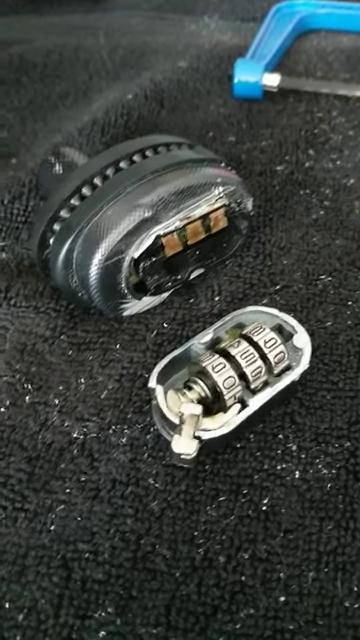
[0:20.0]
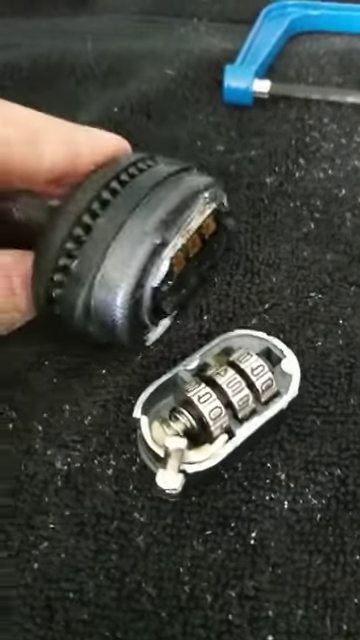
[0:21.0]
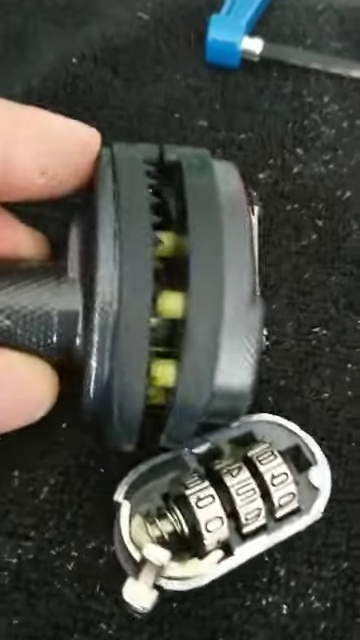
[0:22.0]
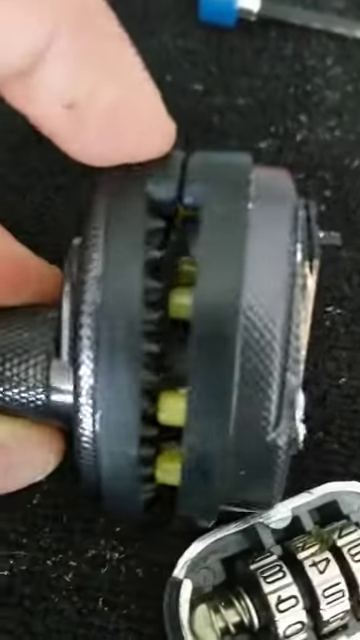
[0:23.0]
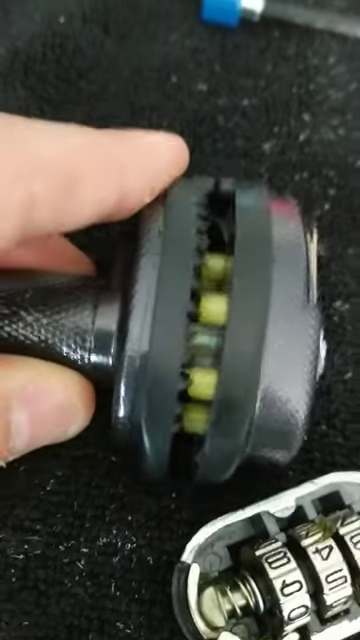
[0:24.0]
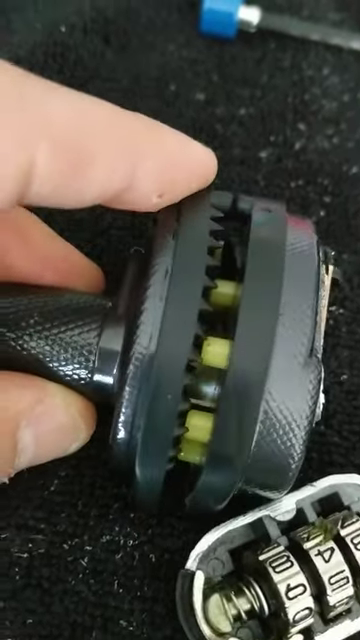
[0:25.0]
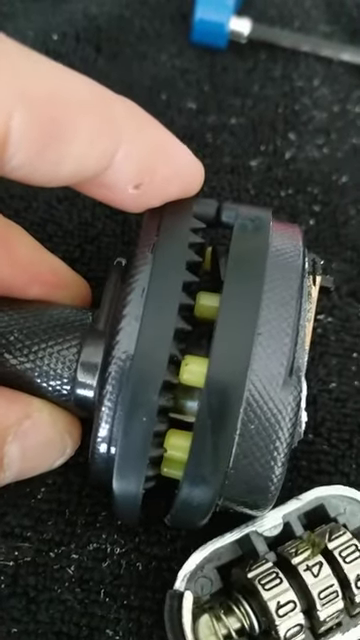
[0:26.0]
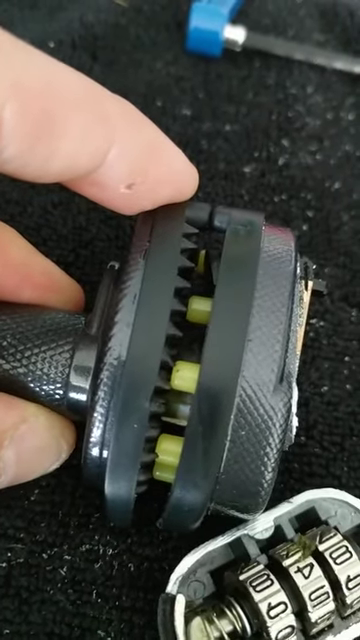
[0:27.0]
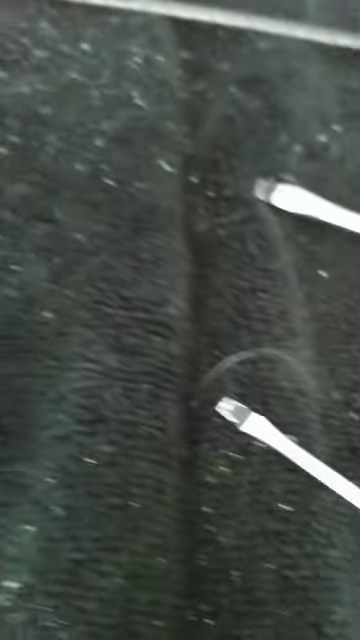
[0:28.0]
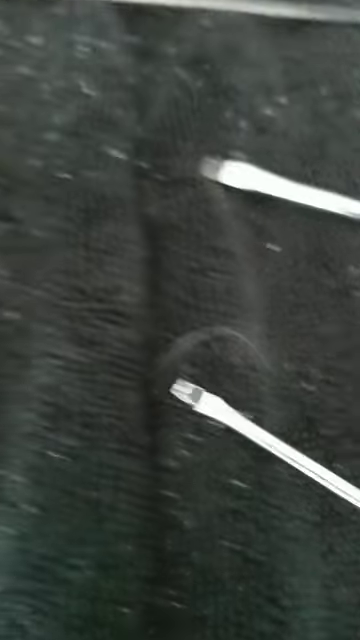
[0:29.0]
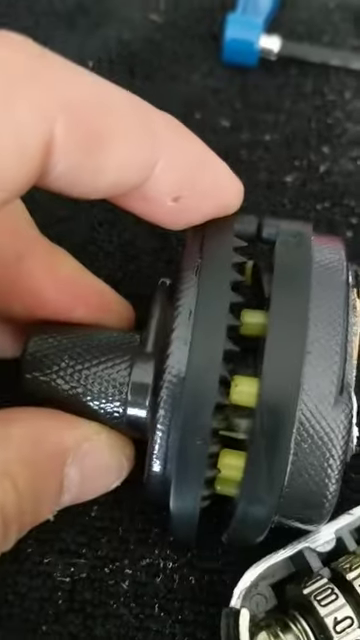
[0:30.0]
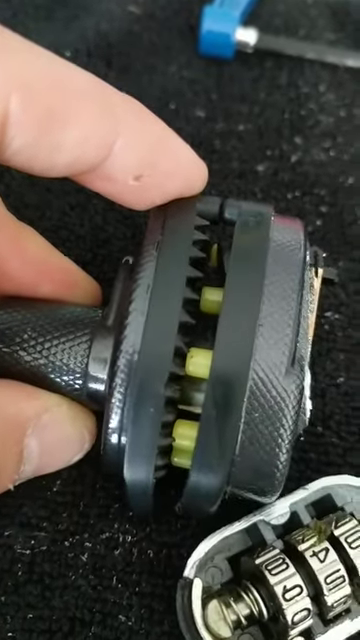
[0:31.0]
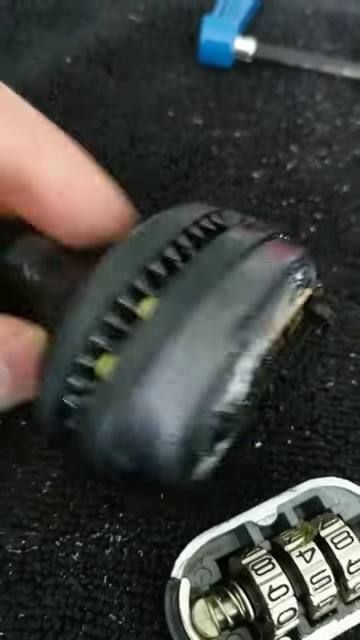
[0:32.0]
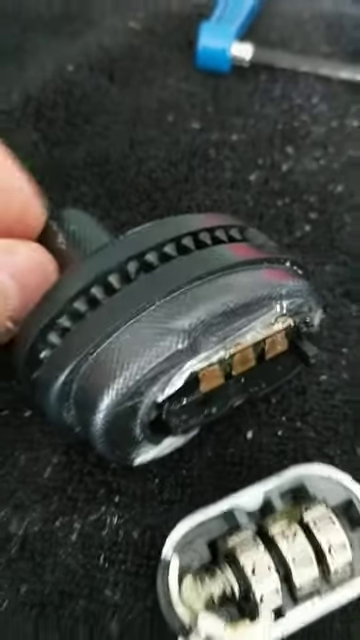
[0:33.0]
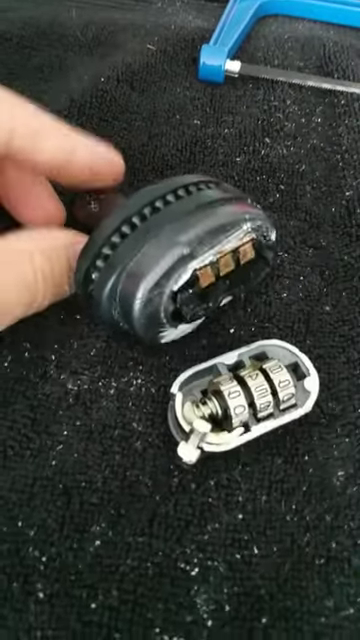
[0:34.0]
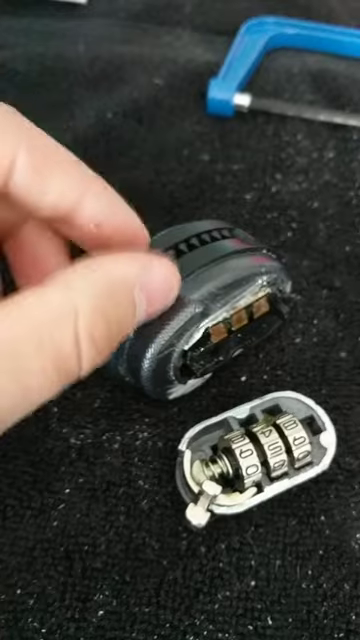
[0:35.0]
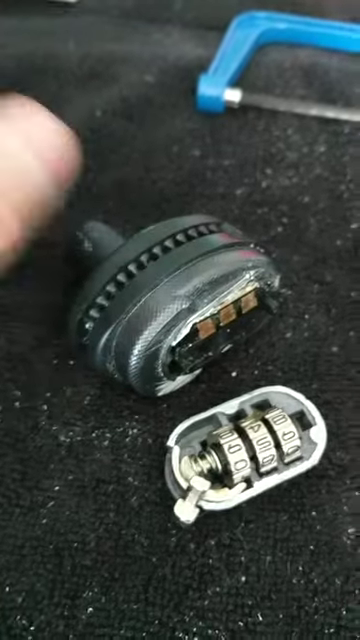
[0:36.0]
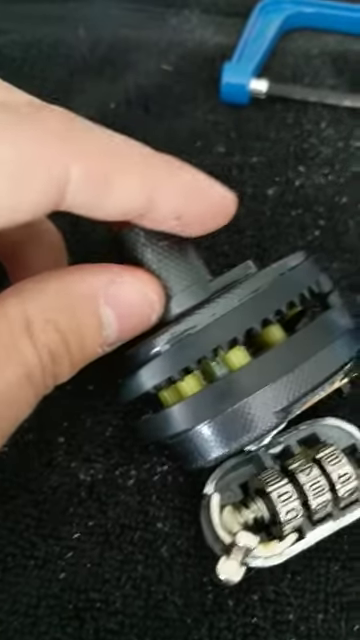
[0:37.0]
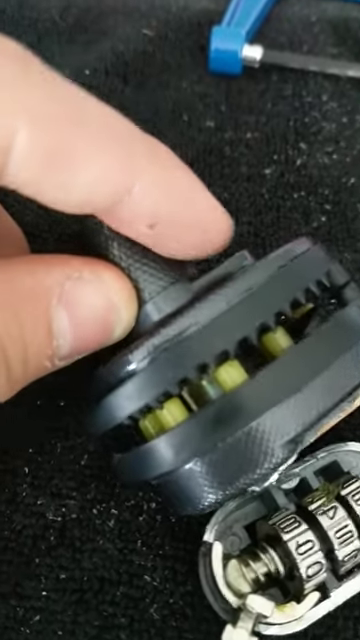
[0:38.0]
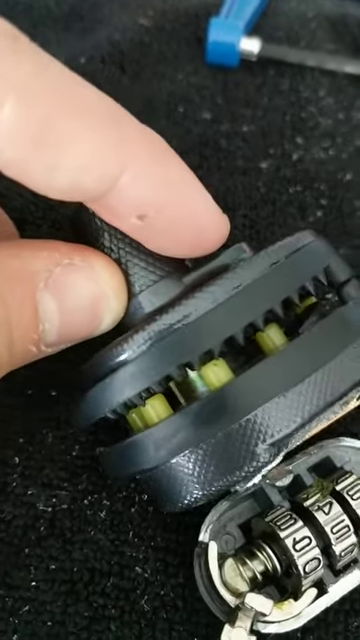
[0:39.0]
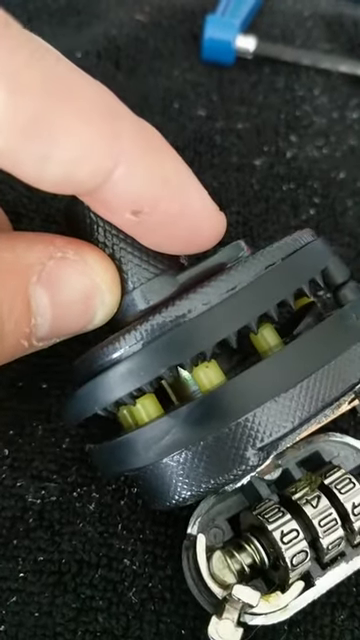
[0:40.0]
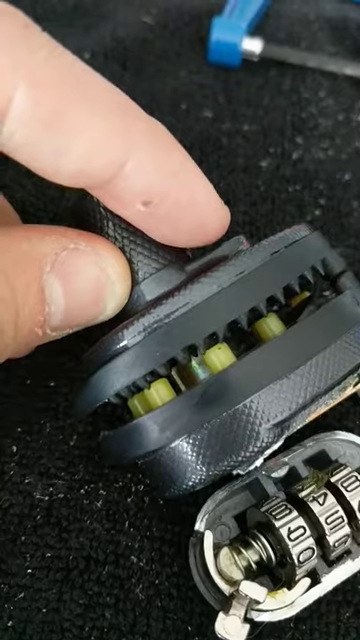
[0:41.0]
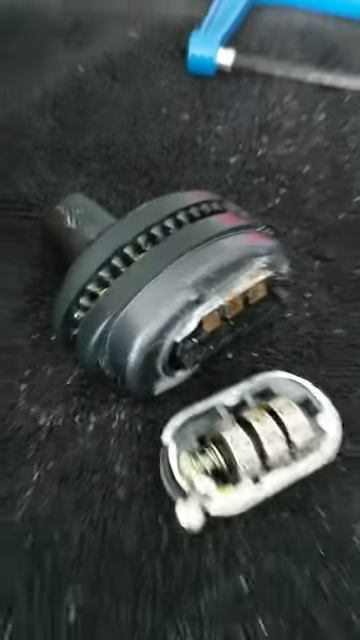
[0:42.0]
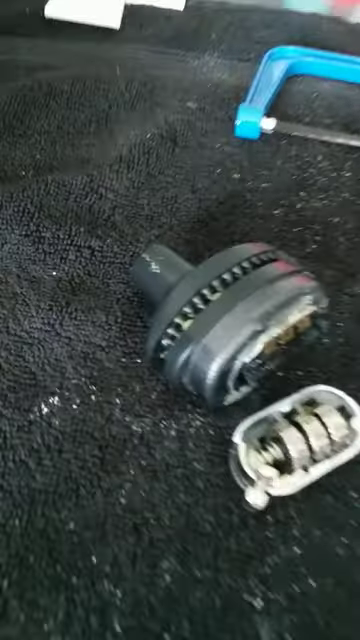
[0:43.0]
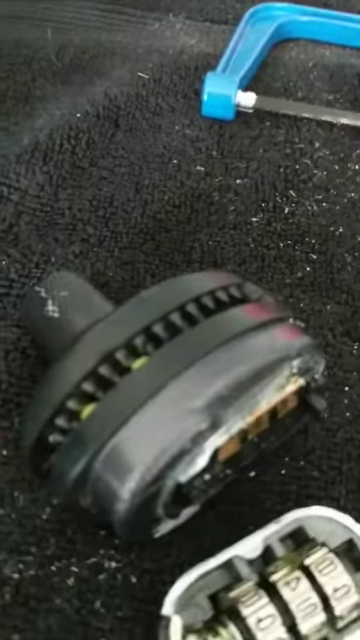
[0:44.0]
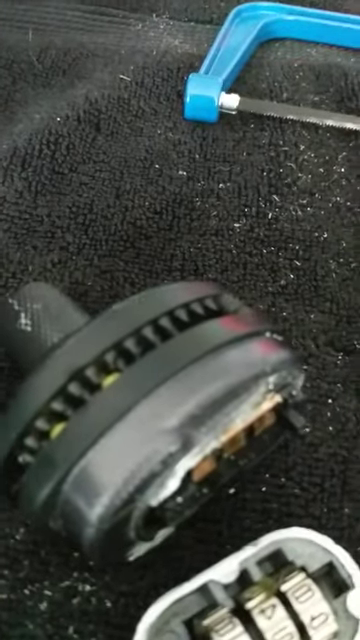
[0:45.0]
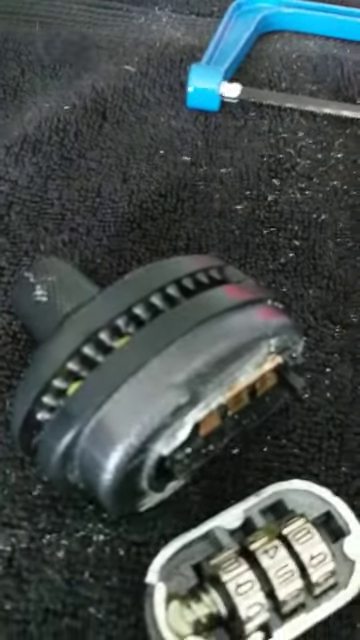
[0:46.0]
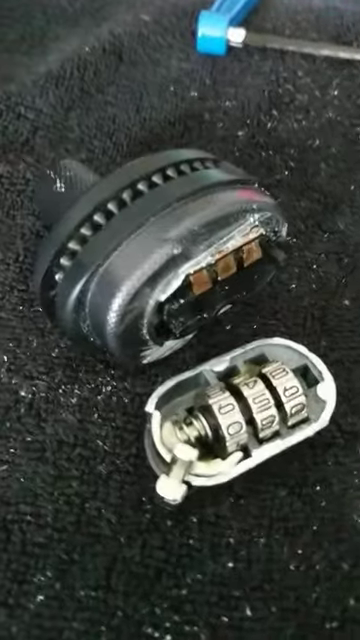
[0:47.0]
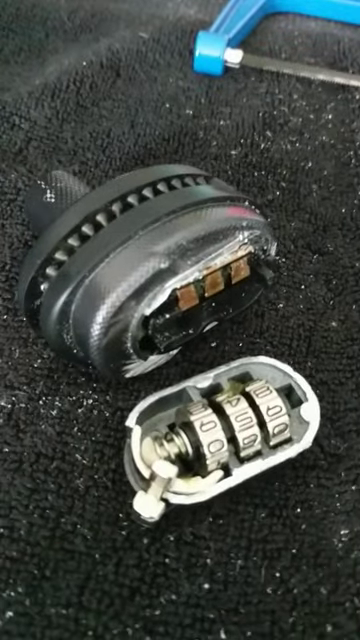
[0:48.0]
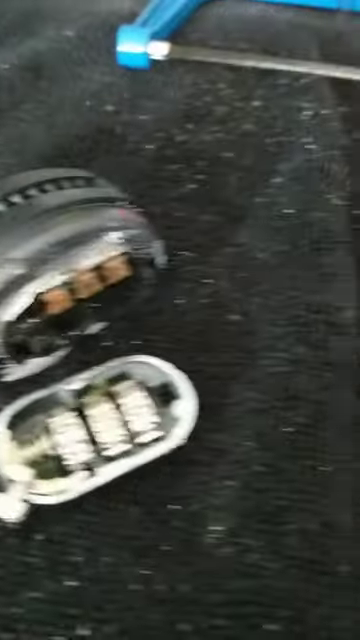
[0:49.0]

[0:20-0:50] The video zooms in on the damaged key lock on the black background, which is uneven and jagged in texture. A finger appears and grabs the larger part of the key lock by its pointed black handle, and the view zooms in to the openings and the inner portion of the larger chunk, showing yellow objects inside the openings. The video zooms out from the damaged key lock to show the end pieces of two screwdrivers placed side by side on the uneven surface. Beside the bigger chunk is the metal-looking part of the key lock with a protruding silver metal knob and cyclical numbering, showing "09" on one row, "85" on another and "89" on the last row. In the top right section is half of the tool with a blue handle and an attached black metal line, also on the uneven surface. After grabbing the larger chunk, the hand drops it.